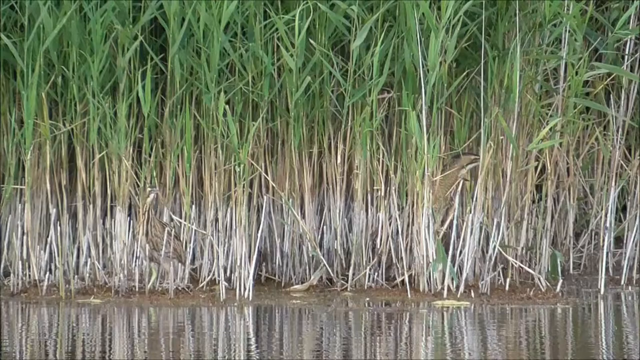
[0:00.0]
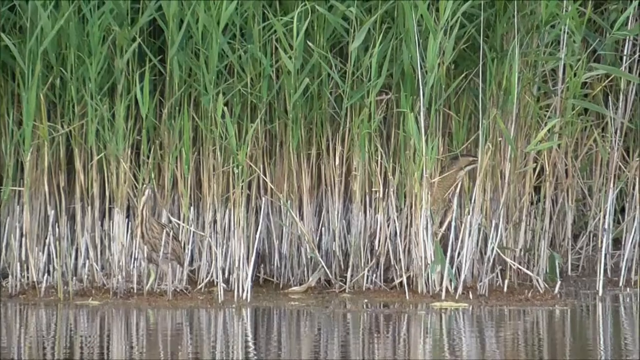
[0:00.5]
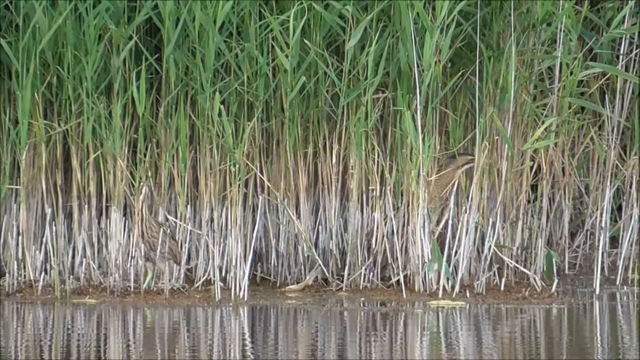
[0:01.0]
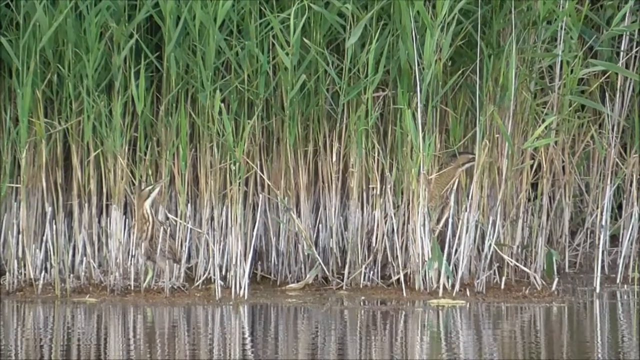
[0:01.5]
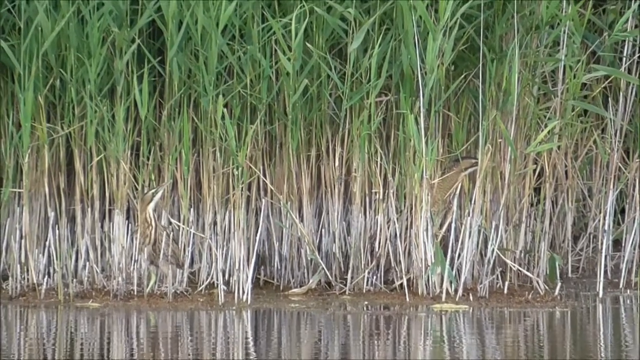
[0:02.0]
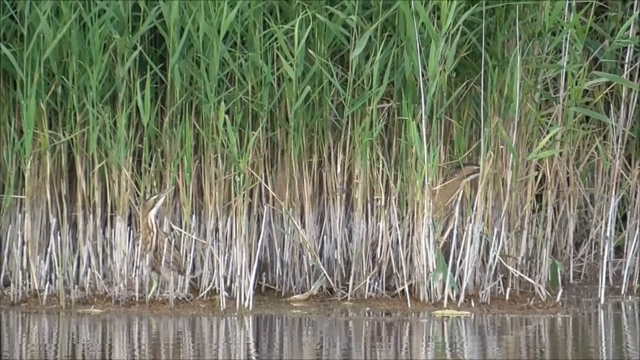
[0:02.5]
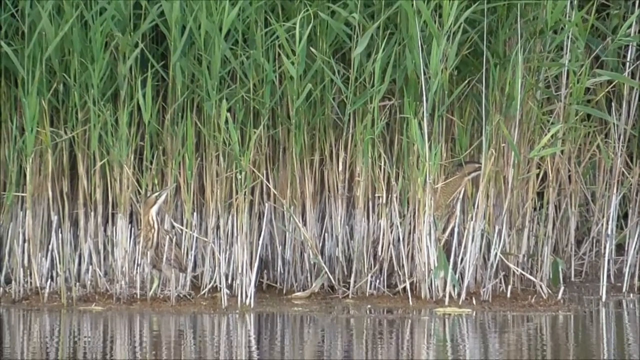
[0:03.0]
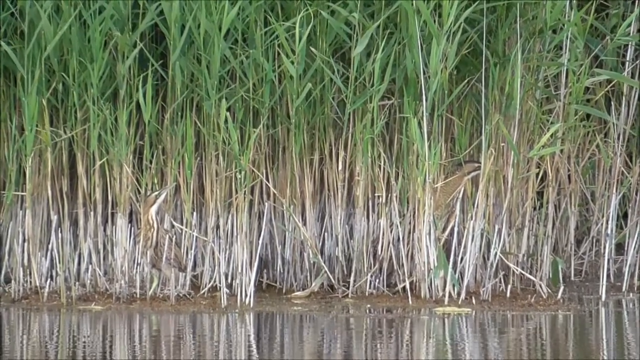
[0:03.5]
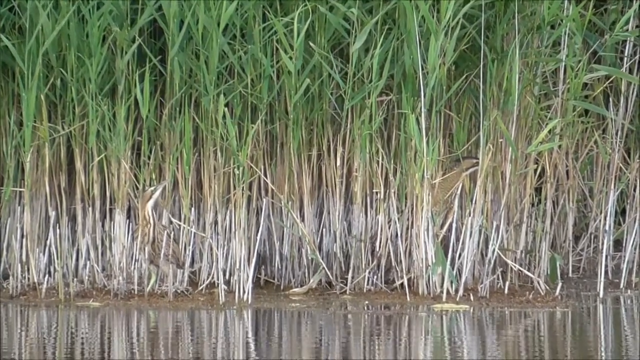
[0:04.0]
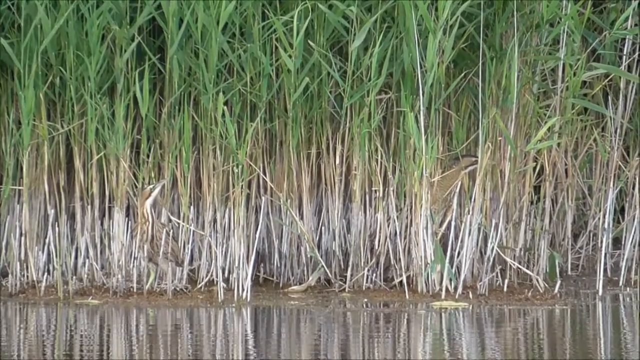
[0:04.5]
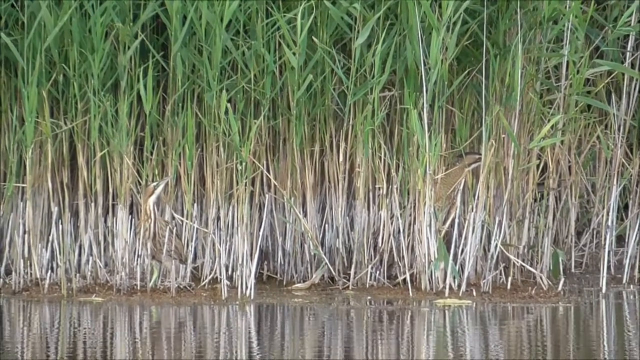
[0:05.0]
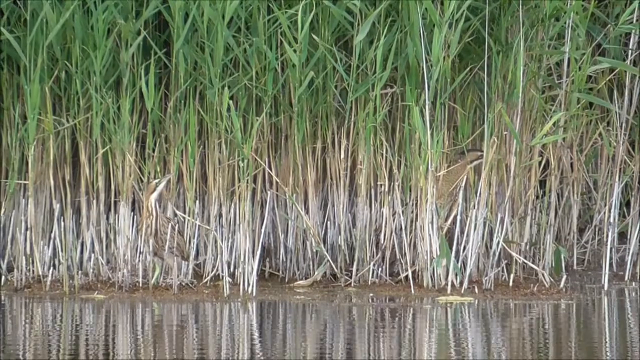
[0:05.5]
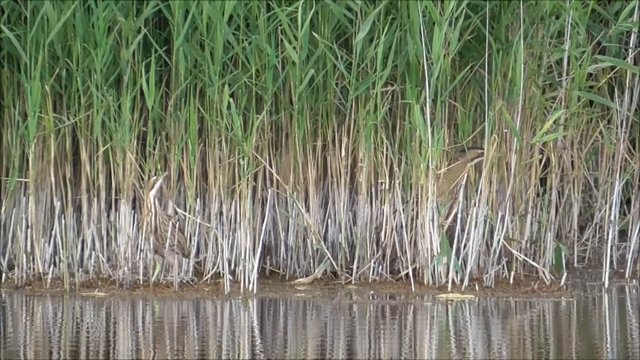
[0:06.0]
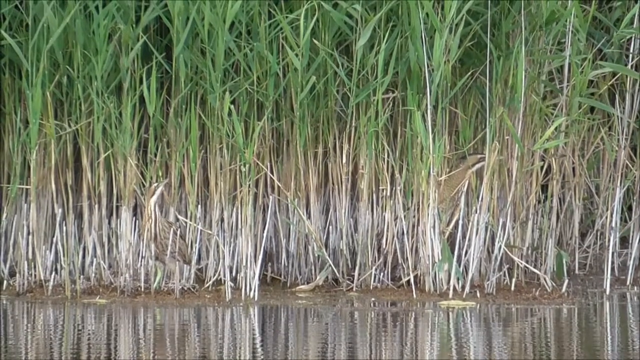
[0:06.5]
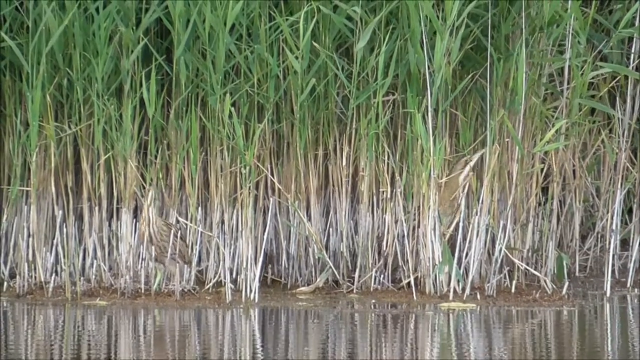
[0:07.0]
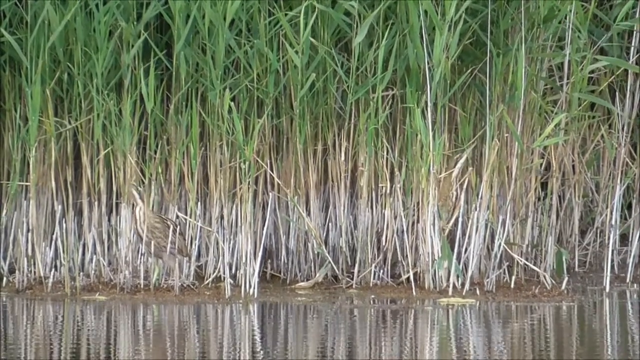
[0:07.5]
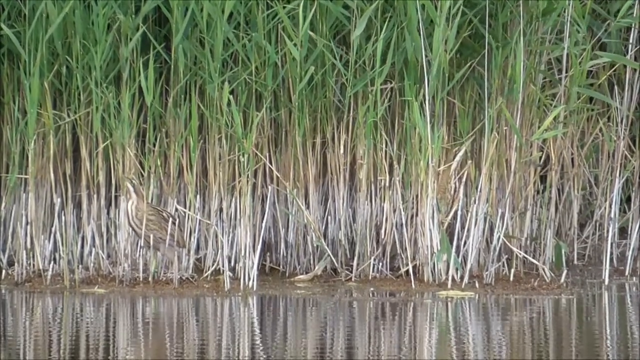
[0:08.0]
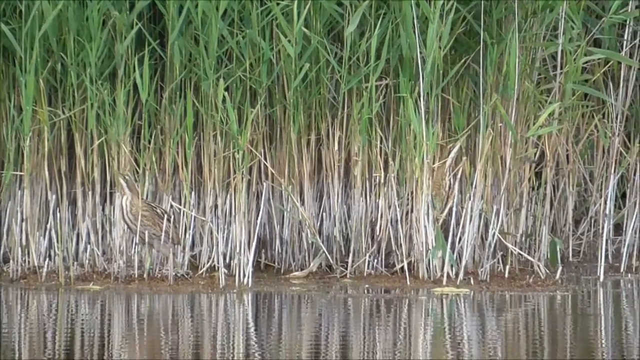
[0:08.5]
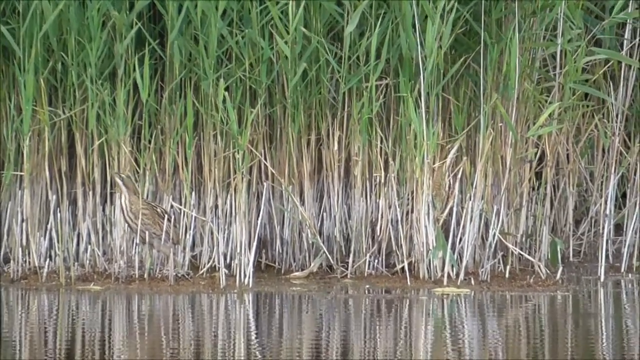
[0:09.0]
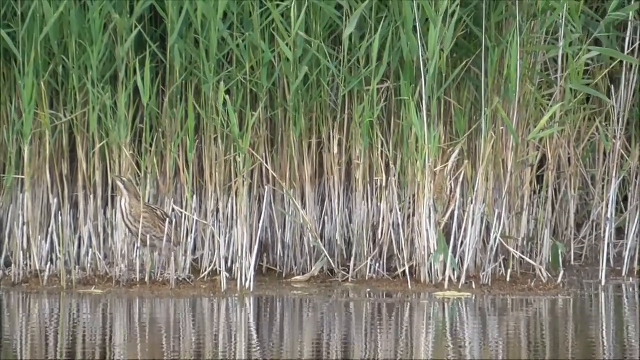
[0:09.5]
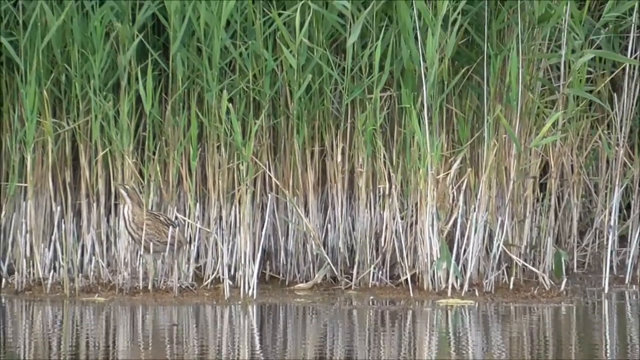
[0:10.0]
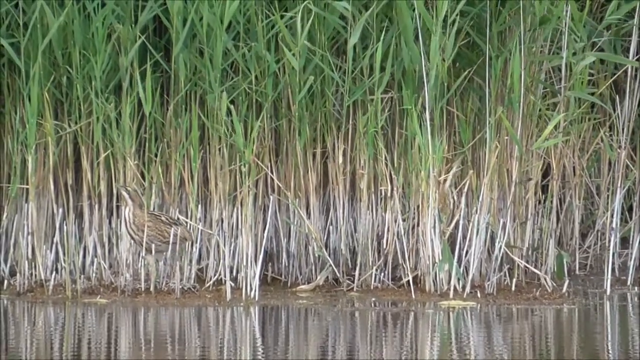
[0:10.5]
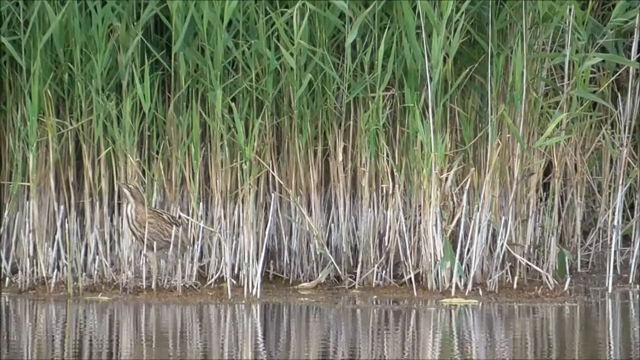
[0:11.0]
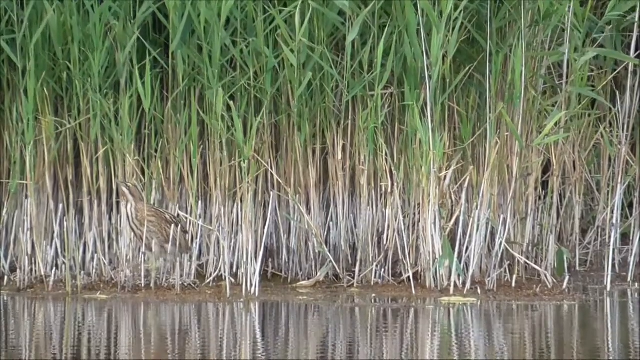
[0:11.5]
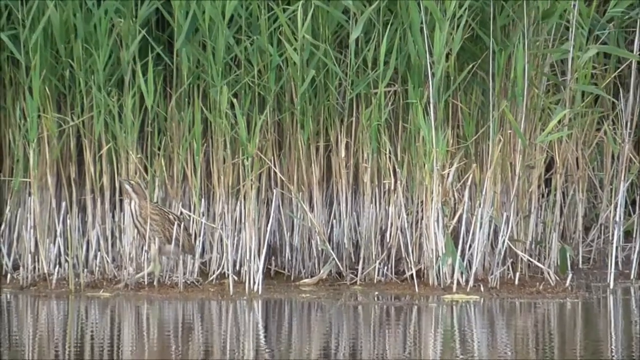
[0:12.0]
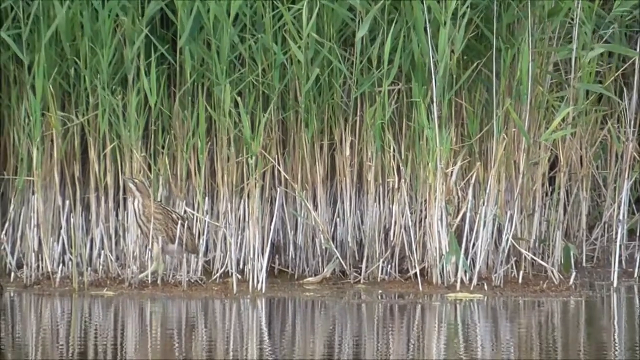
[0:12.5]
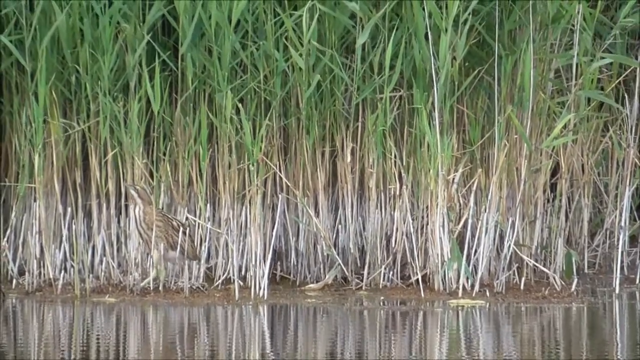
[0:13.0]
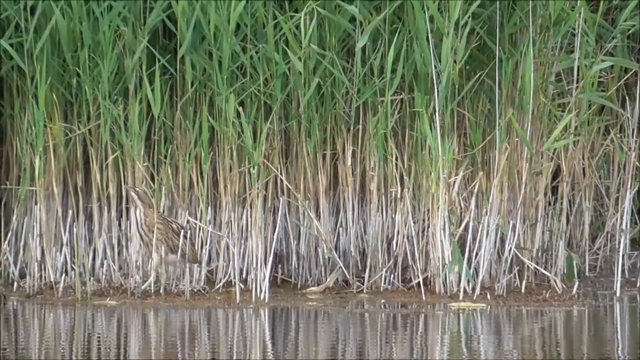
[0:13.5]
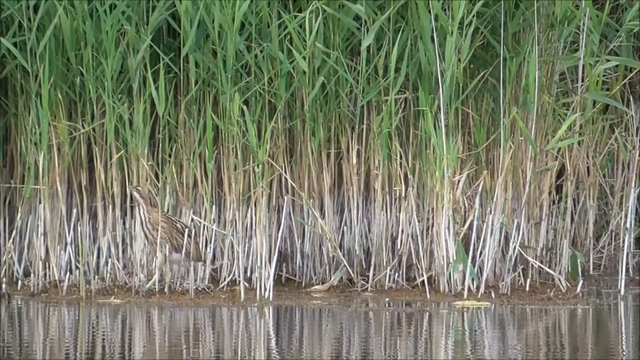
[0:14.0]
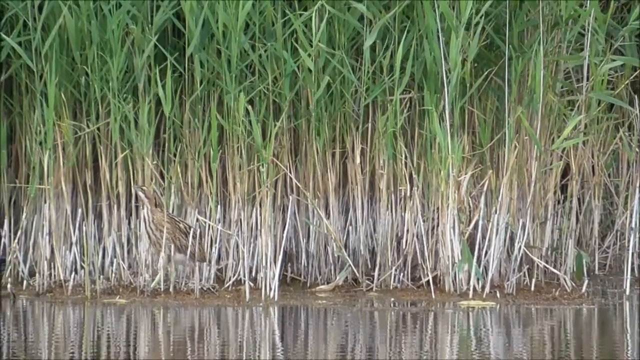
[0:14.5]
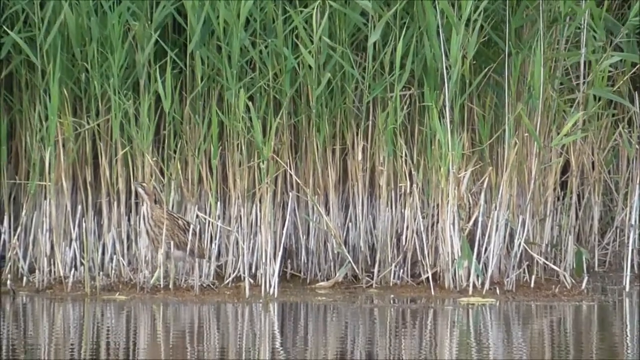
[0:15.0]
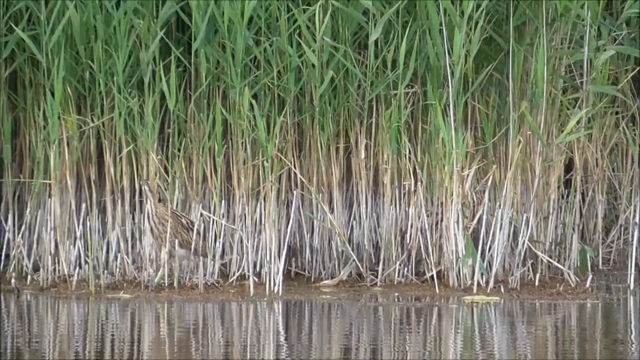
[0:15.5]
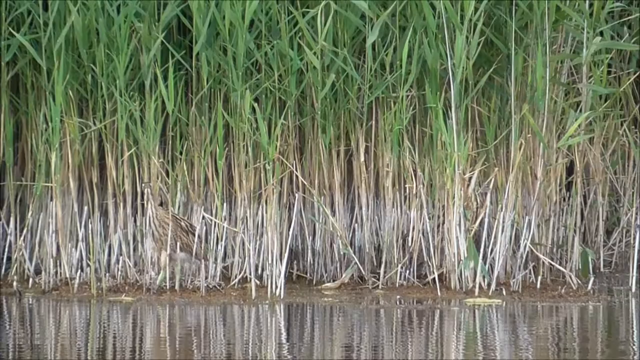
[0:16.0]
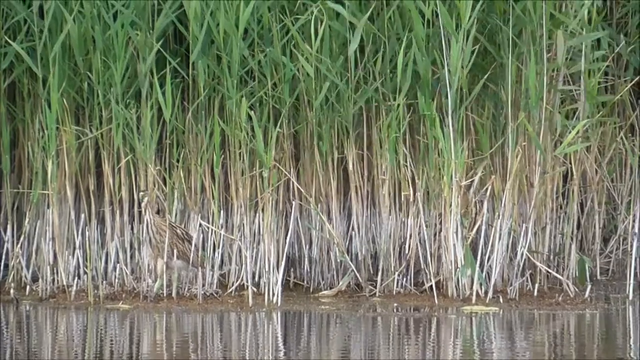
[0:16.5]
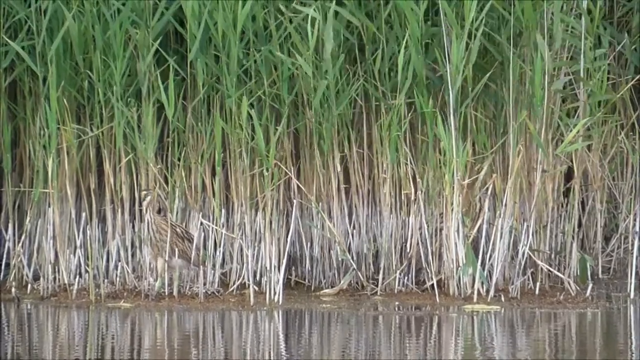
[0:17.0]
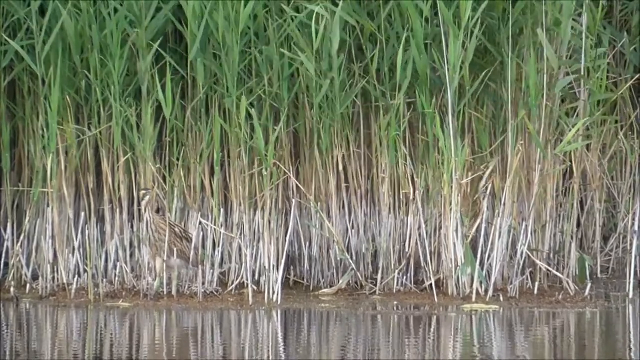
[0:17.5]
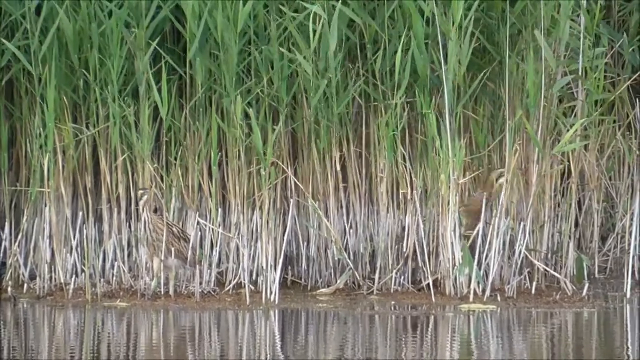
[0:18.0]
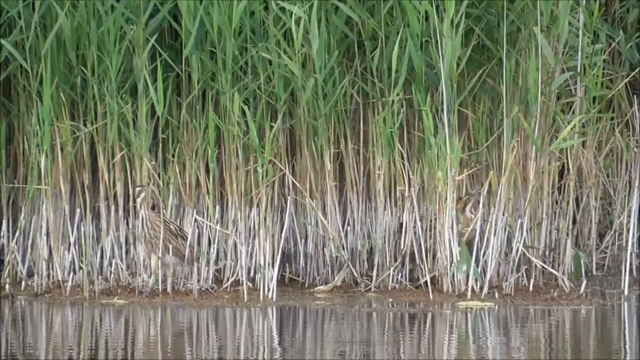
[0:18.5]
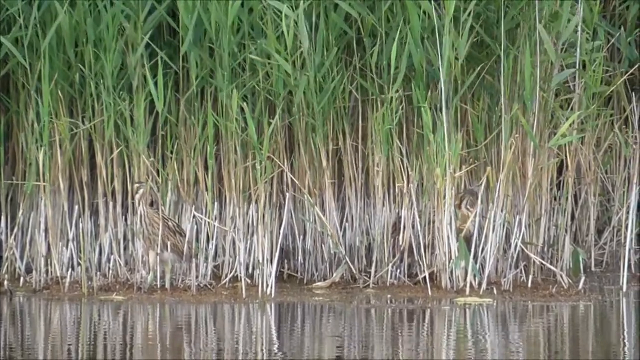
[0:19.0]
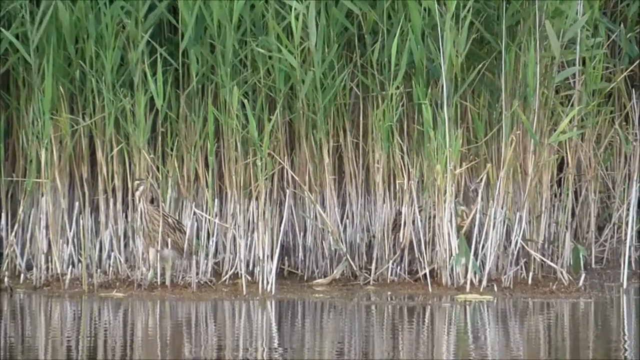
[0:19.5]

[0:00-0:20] The camera points toward a waterfront area. The water looks fairly shallow and has ripples in it, and plants come out of the really shallow dirt right next to the water. The plants essentially cover the entire screen except for maybe the bottom fourth, which shows the water. The plants are densely packed together, and two birds are inside them, kind of looking around and moving around among the plants. Some bugs fly around. The birds are maybe one to two feet tall, overall kind of brown with some white on the head and belly, and have longish legs, though not extremely long. The water is not super dirty looking; it has some clarity but is not blue, and the area looks almost swampy. The plants have green leaves on top, and lower down their stems go from brown to white as they go into the ground.